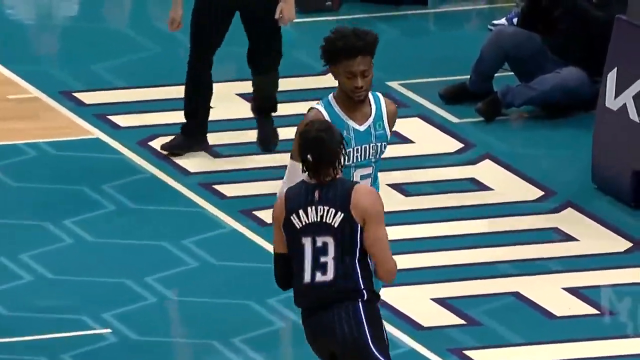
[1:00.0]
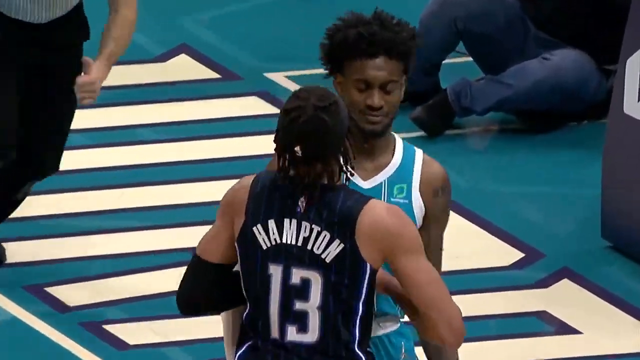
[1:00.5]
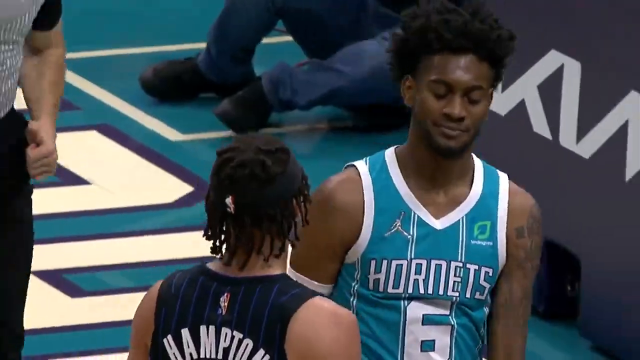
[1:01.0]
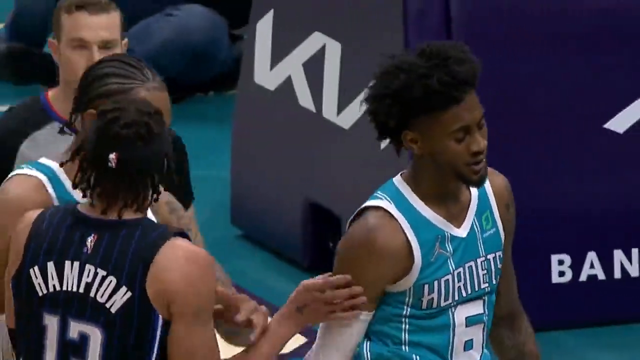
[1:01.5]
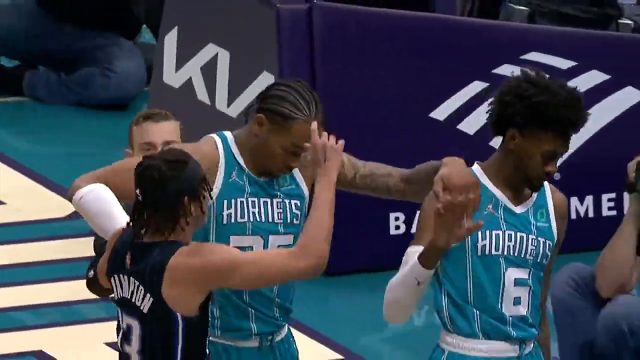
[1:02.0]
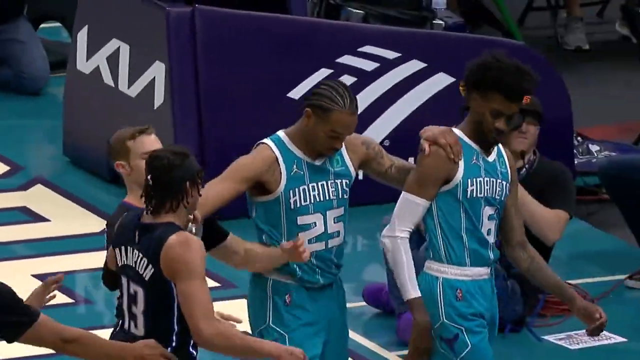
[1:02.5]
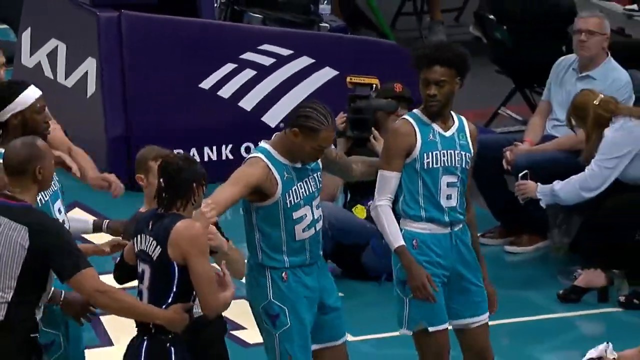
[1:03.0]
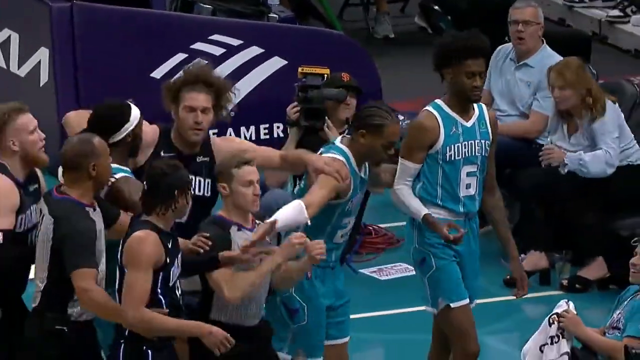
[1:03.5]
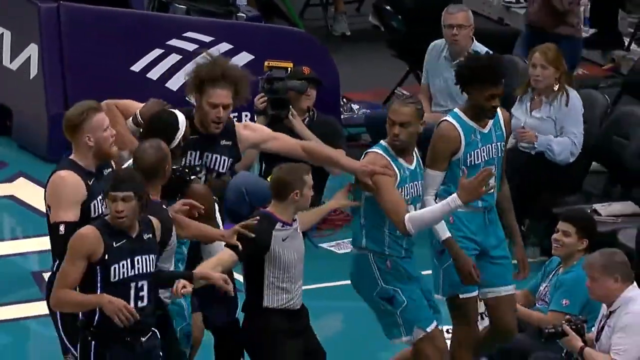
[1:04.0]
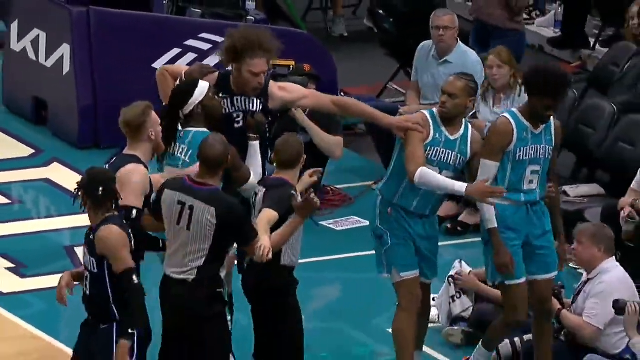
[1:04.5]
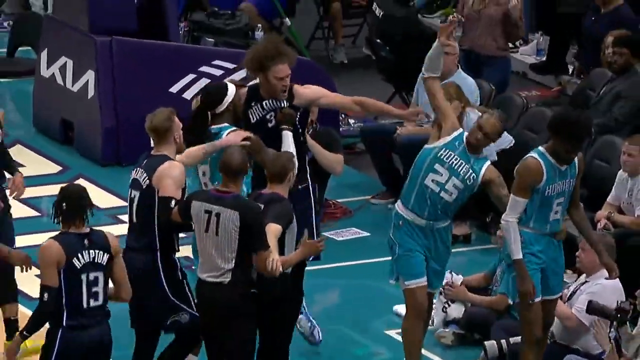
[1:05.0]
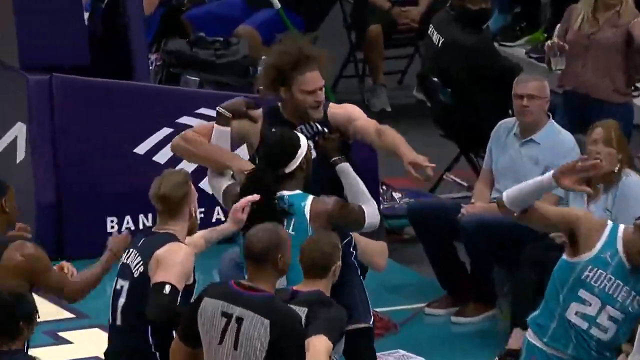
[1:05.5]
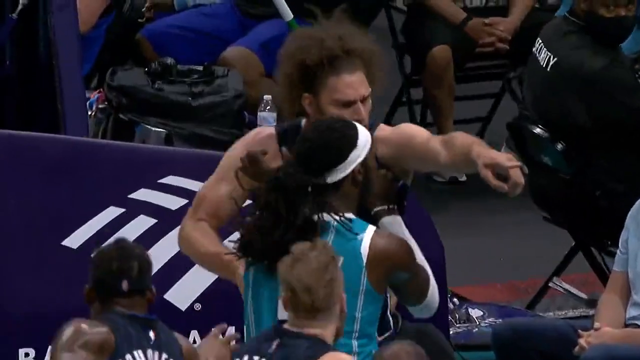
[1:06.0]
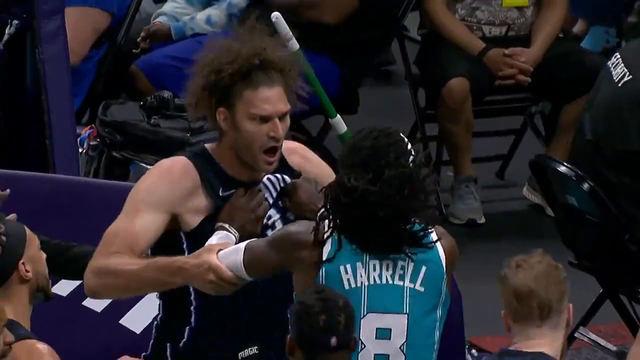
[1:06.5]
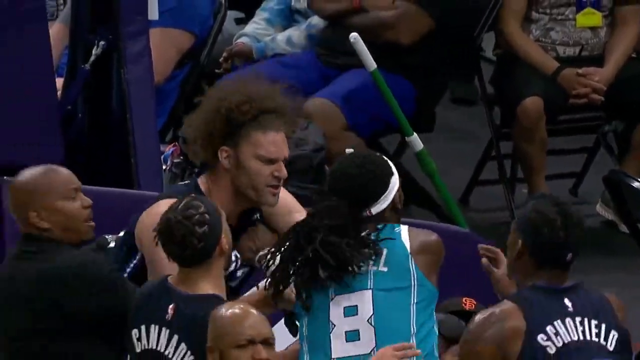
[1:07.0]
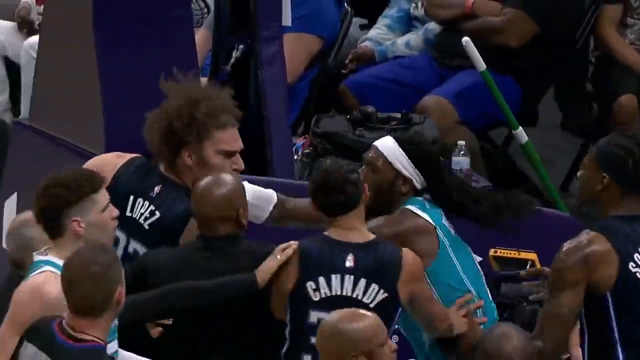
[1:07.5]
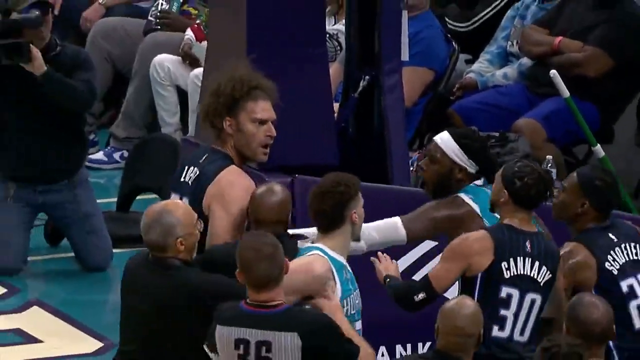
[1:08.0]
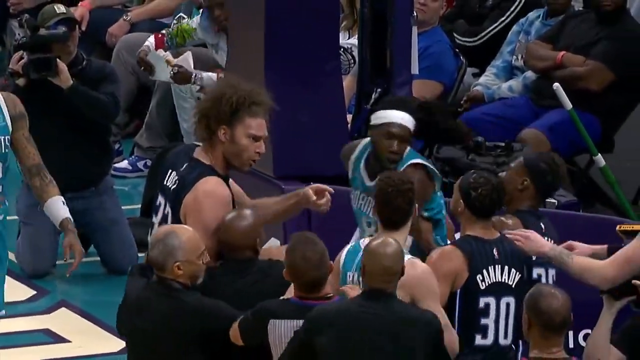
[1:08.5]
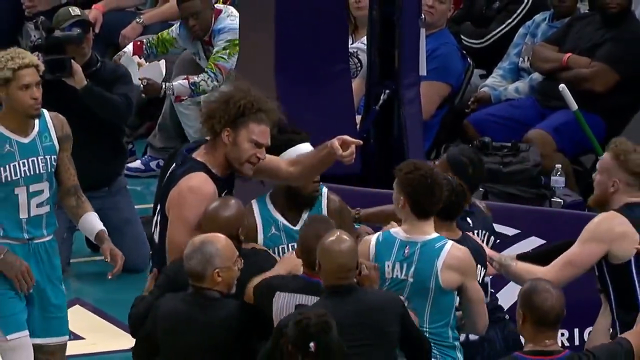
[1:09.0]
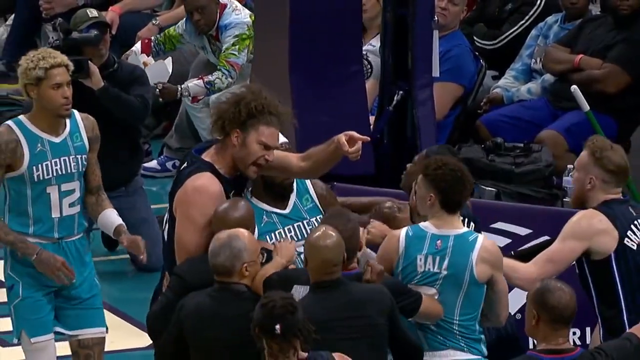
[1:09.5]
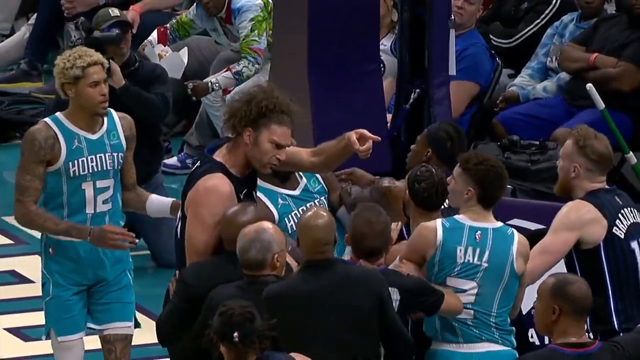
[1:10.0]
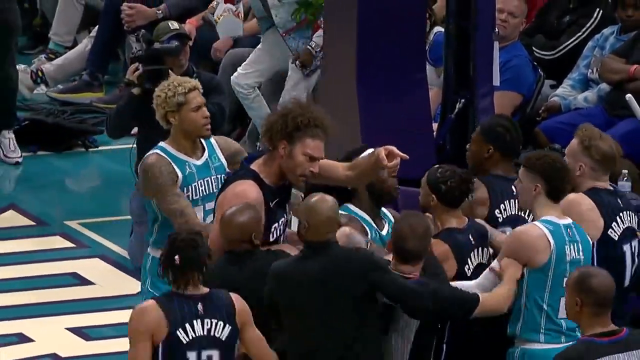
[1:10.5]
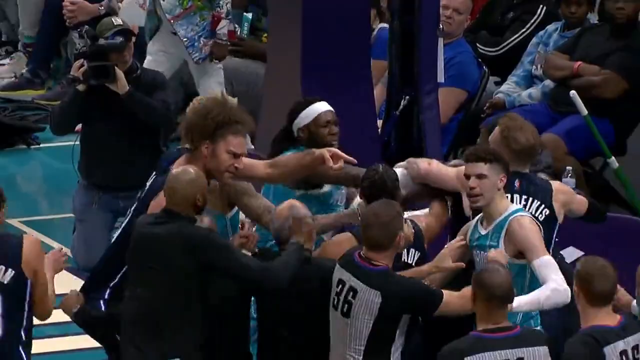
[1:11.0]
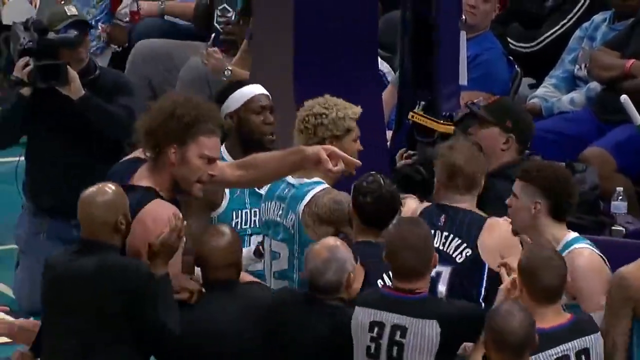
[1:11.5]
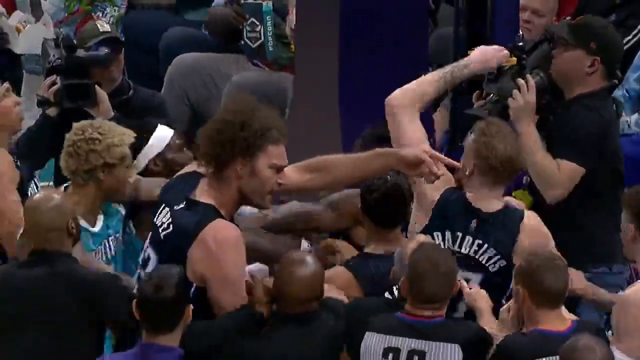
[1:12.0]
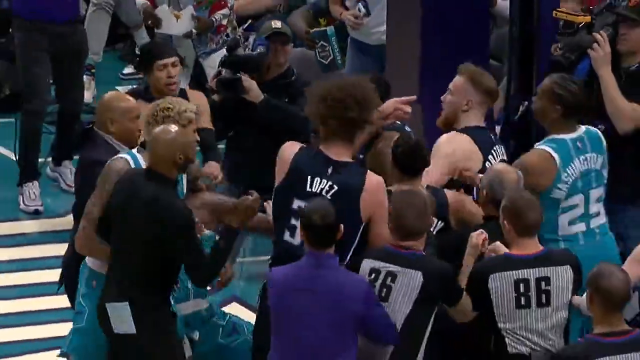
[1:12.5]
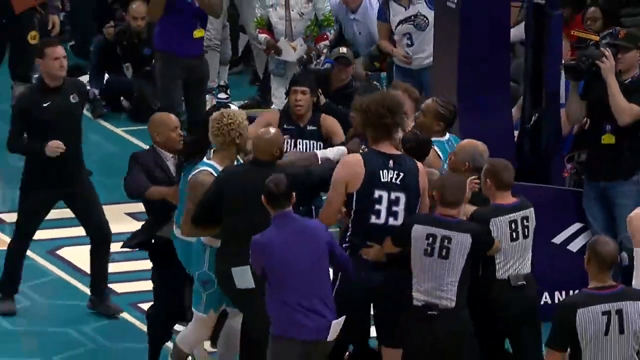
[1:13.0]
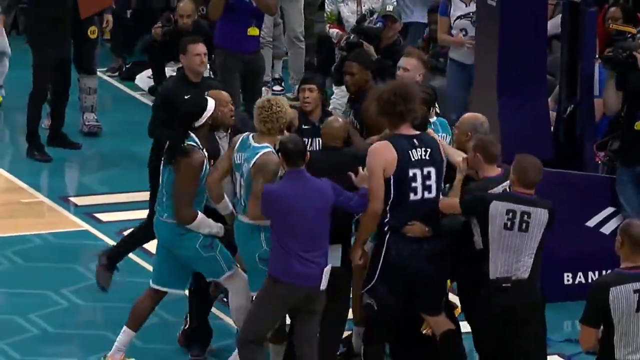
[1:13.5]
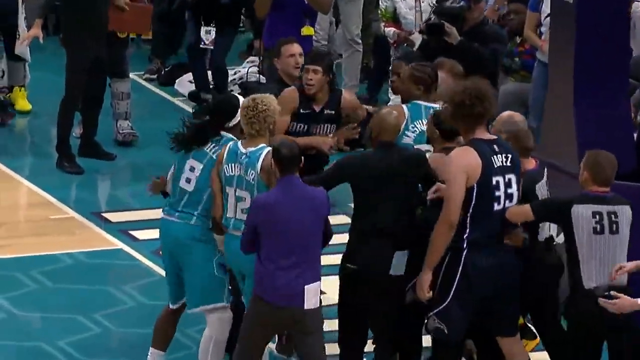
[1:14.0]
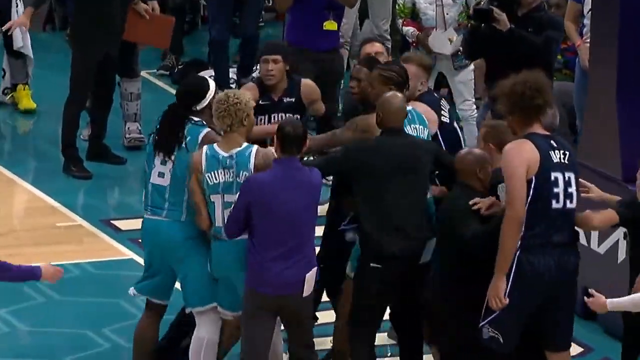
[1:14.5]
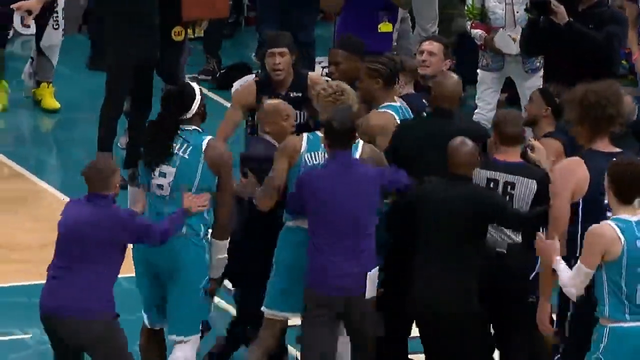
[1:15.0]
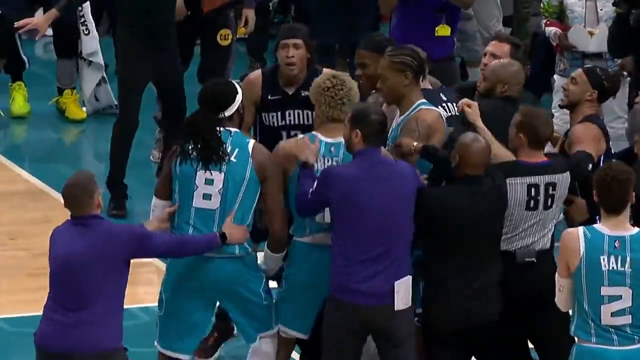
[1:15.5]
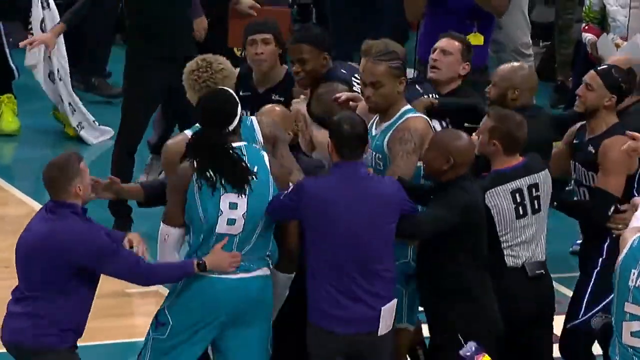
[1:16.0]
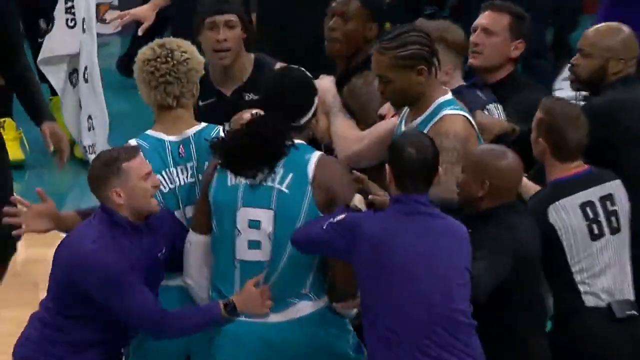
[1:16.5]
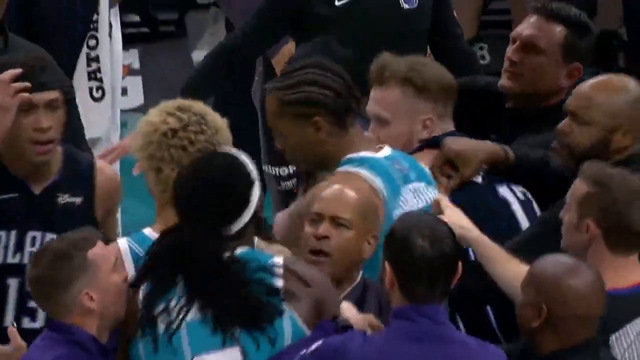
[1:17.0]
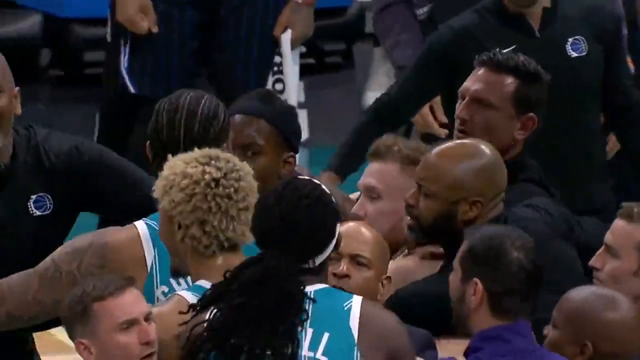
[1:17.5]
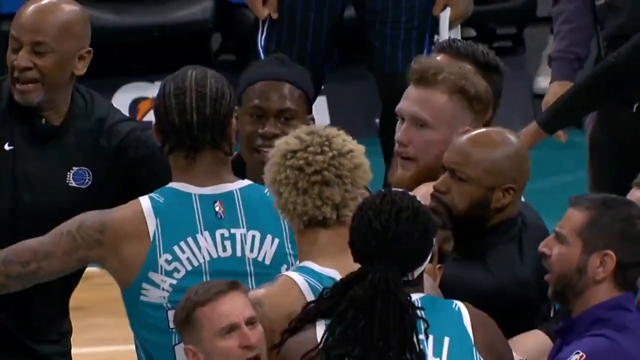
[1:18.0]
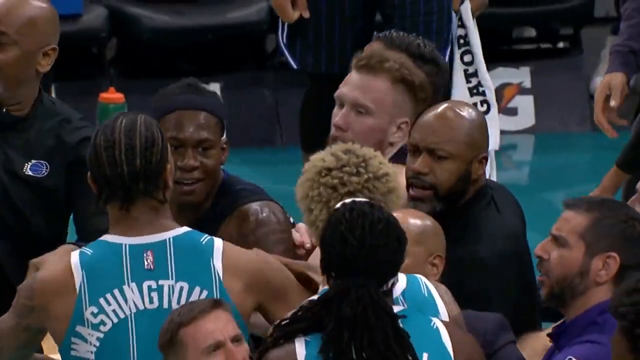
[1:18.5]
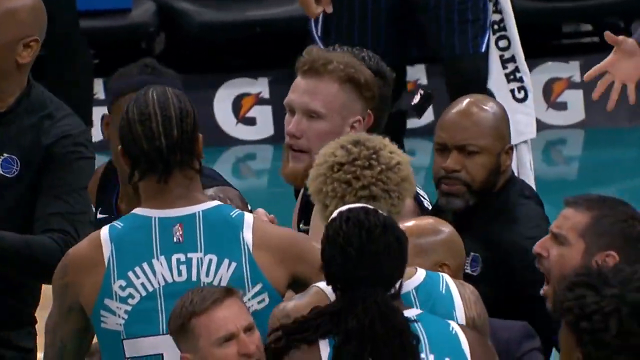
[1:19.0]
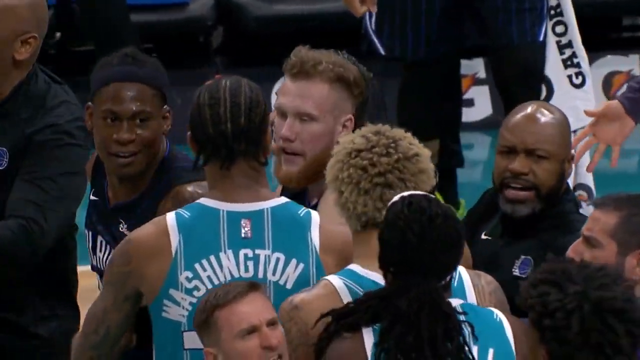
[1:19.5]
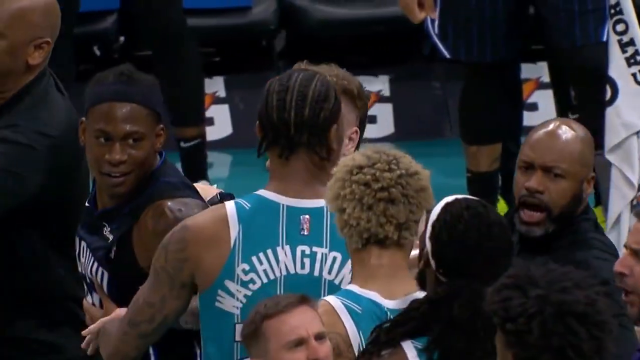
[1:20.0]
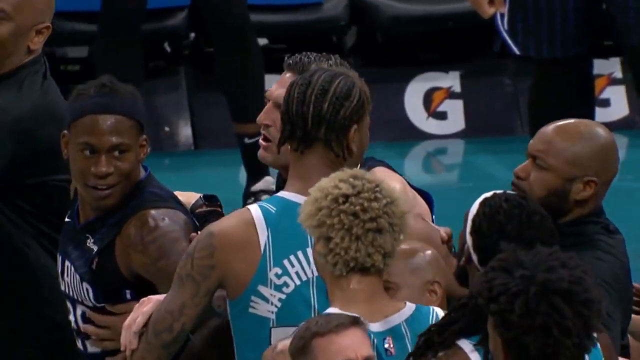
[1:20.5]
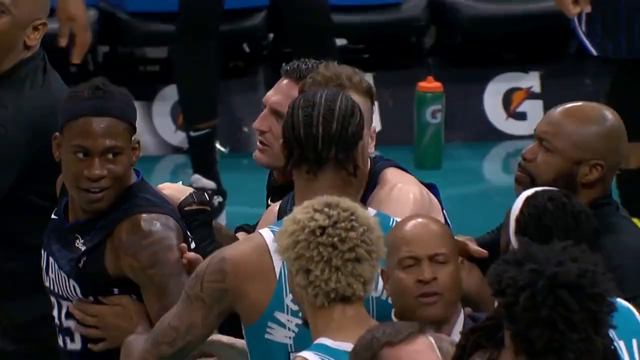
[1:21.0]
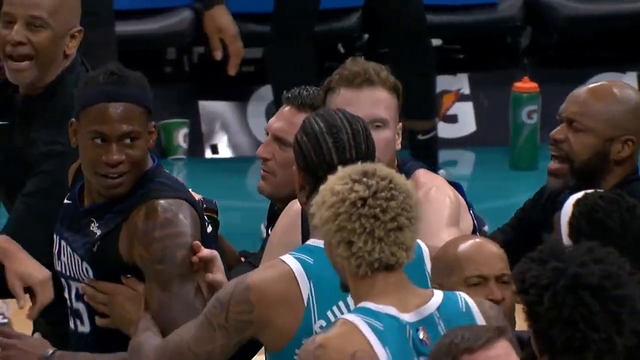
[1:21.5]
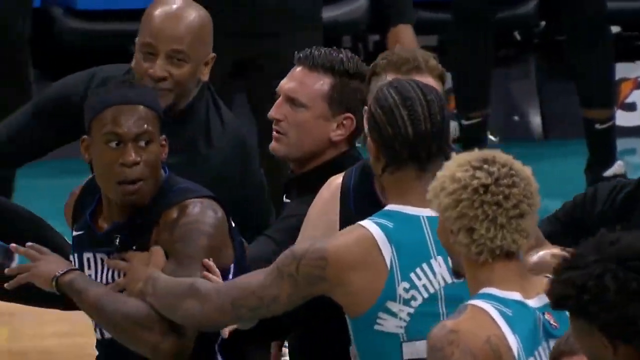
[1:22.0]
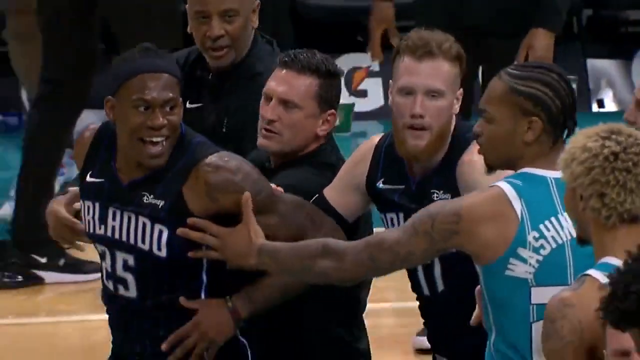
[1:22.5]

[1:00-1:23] Two Hornets players are talking when an Orlando player suddenly comes up behind them and sort of shoves them or grabs their back. Another big altercation breaks out on the court, with arguing and shoving. The referees get involved and try to separate the players. An Orlando player wearing number 33, apparently with Lopez on his jersey, gets especially heated, pointing and shouting, and has to be held back. Other players get involved, and it turns into something sort of like a brawl, but it ends fairly quickly, with the referees apparently getting it under control. The view is up close on the players shoving one another, so the crowd is not really visible and only a little blue on the gym floor can be seen. A man holding a camera and someone in bright yellow shoes are visible.